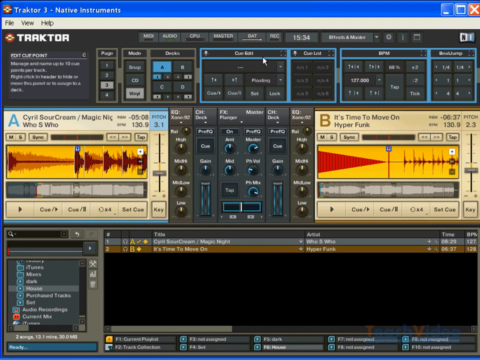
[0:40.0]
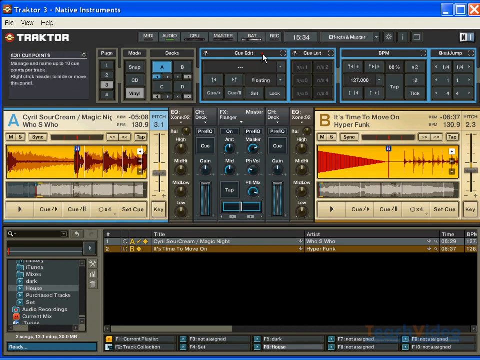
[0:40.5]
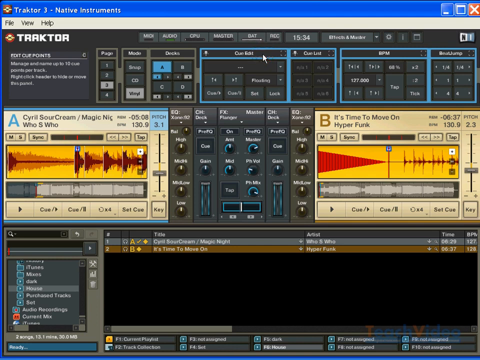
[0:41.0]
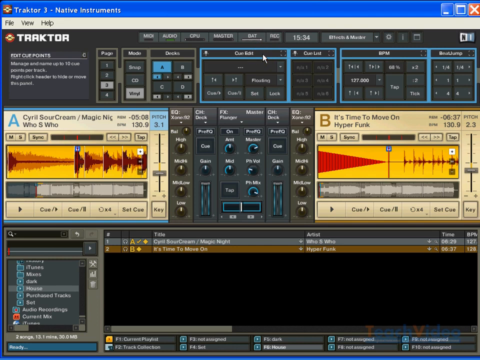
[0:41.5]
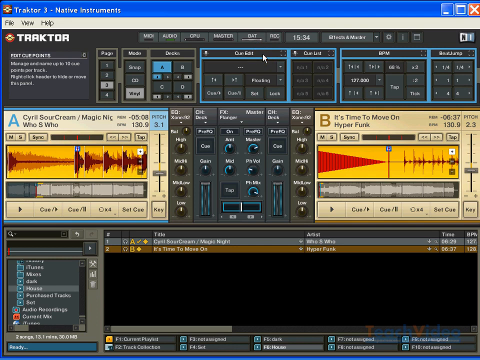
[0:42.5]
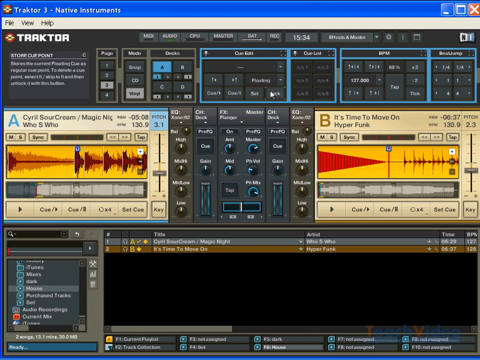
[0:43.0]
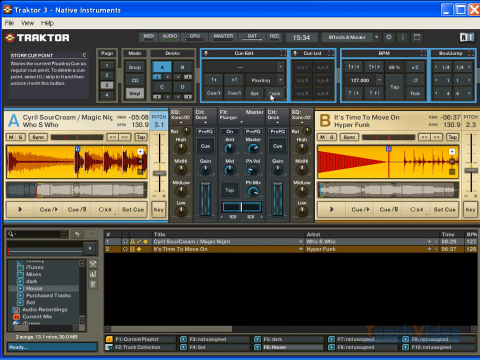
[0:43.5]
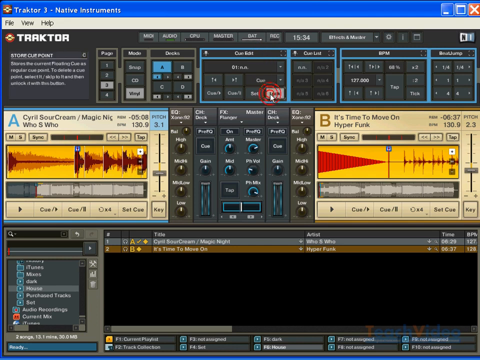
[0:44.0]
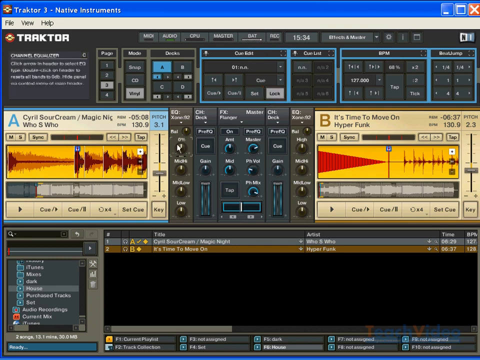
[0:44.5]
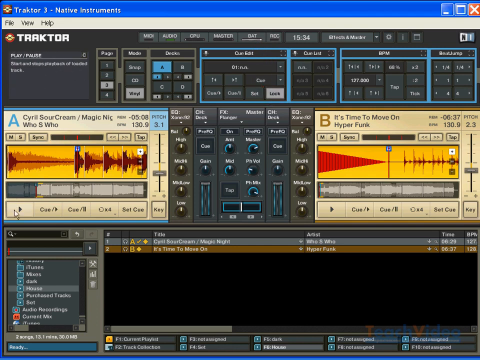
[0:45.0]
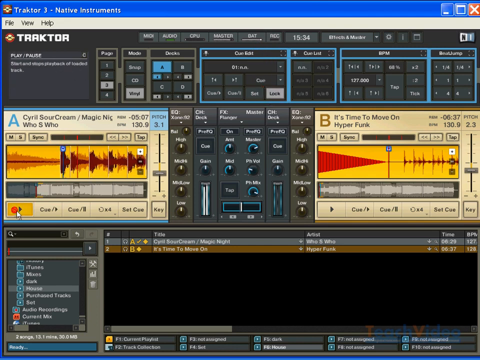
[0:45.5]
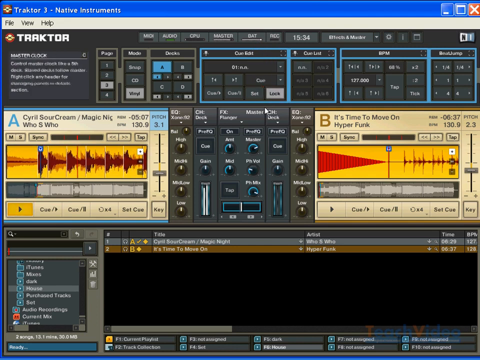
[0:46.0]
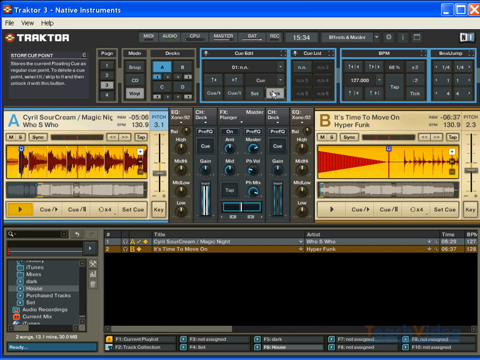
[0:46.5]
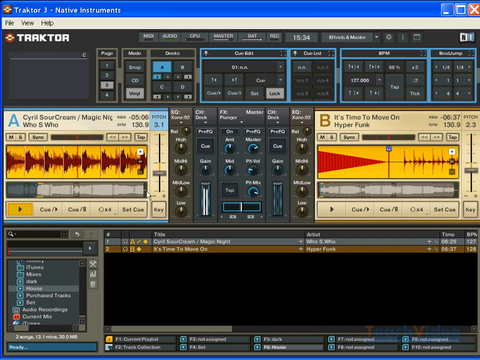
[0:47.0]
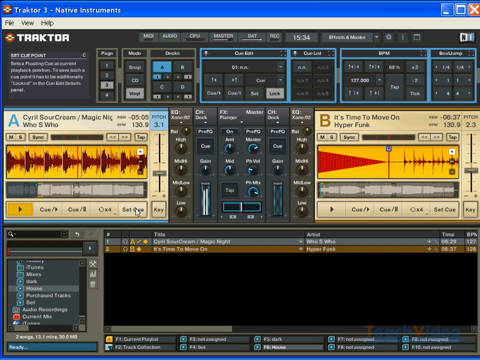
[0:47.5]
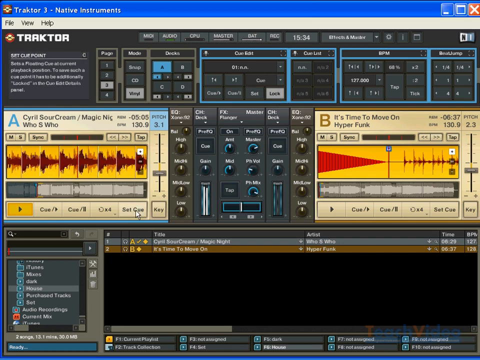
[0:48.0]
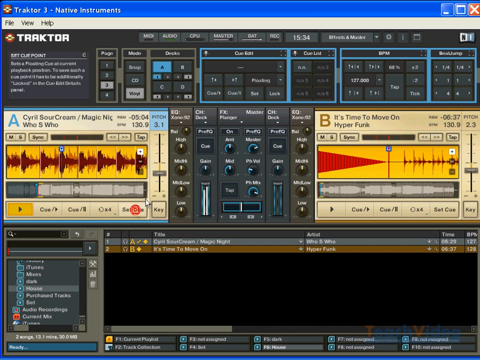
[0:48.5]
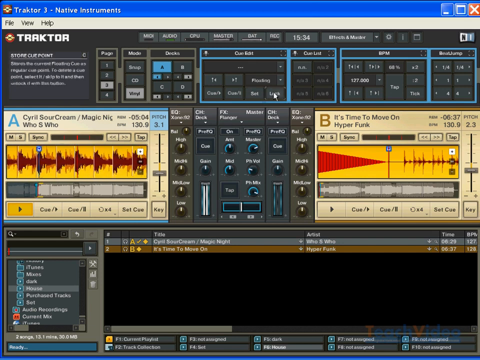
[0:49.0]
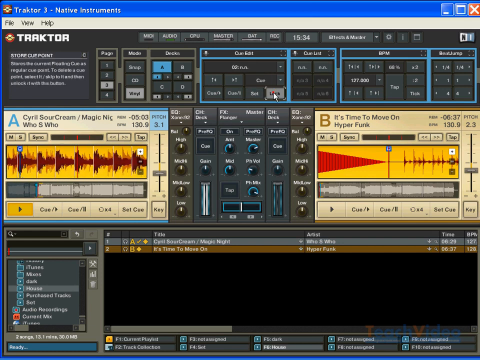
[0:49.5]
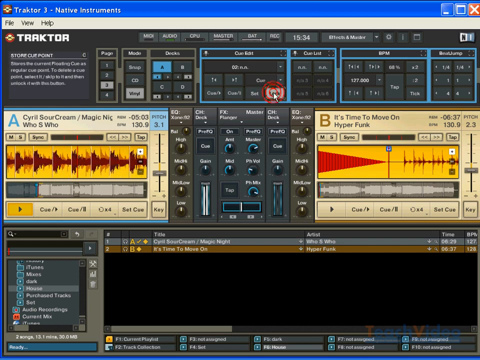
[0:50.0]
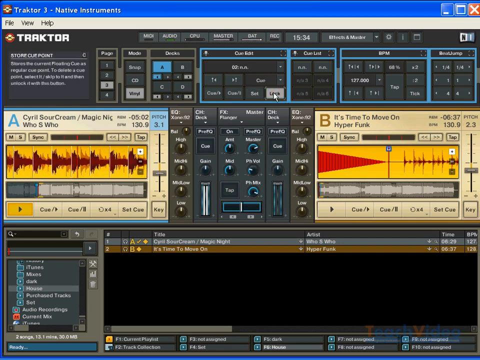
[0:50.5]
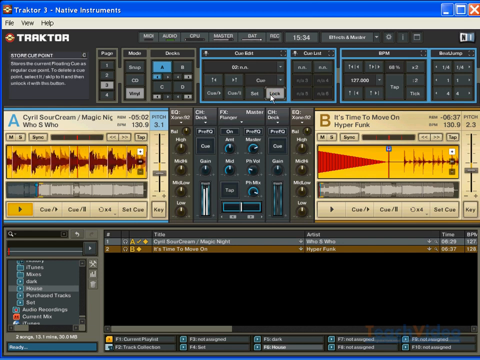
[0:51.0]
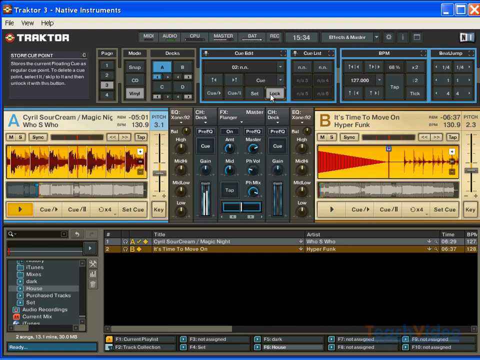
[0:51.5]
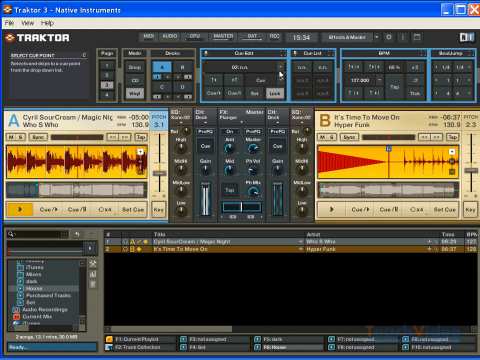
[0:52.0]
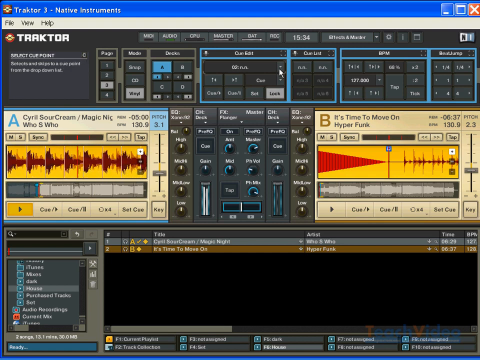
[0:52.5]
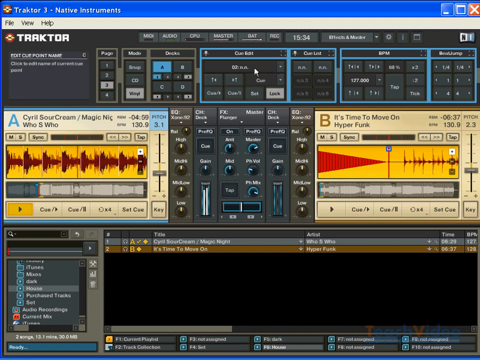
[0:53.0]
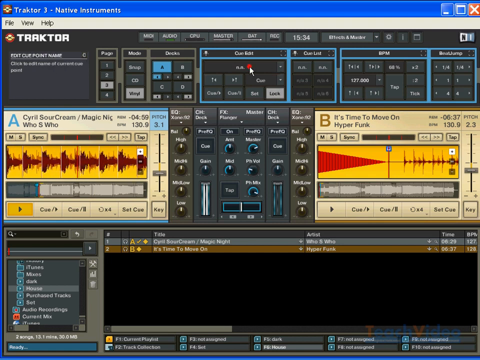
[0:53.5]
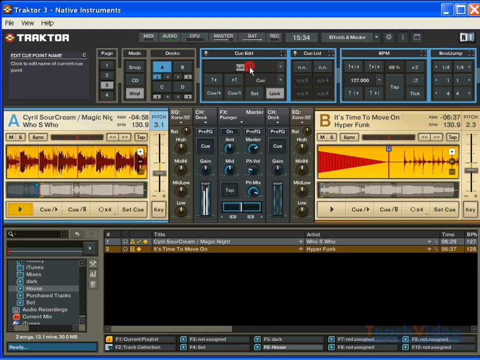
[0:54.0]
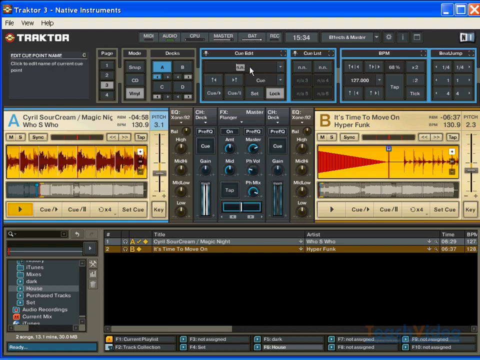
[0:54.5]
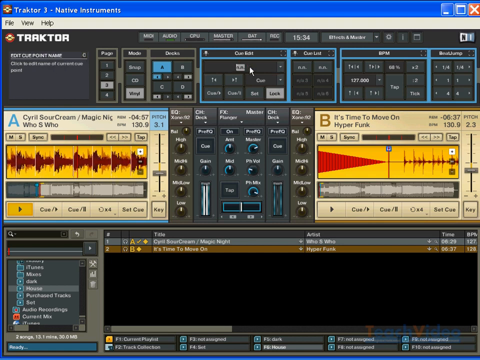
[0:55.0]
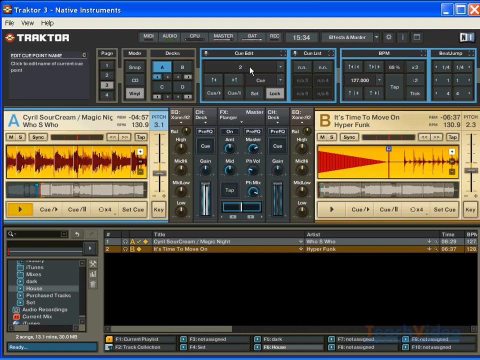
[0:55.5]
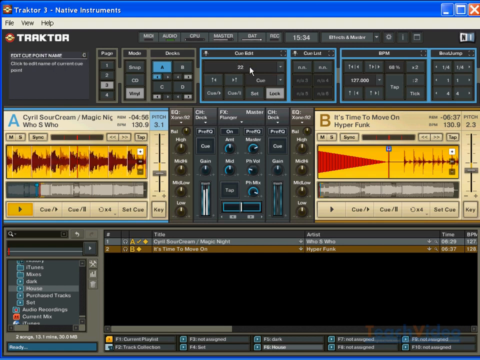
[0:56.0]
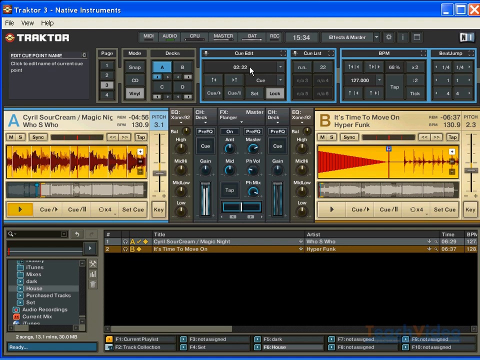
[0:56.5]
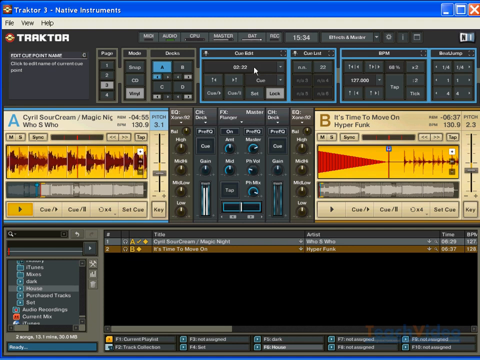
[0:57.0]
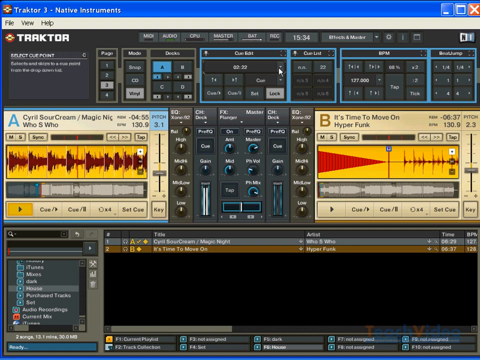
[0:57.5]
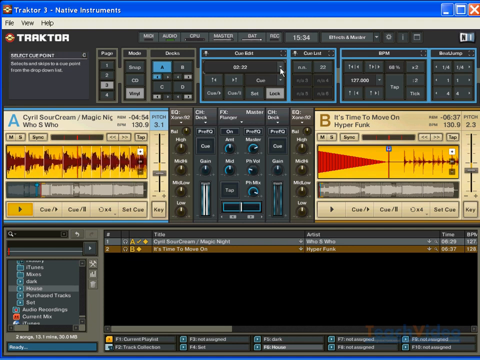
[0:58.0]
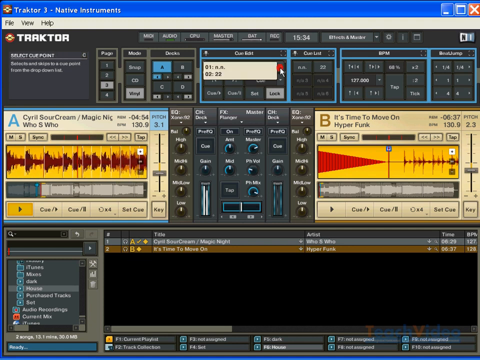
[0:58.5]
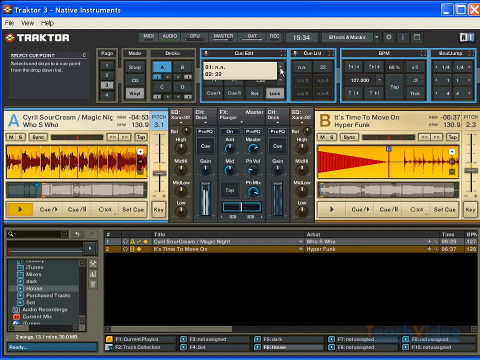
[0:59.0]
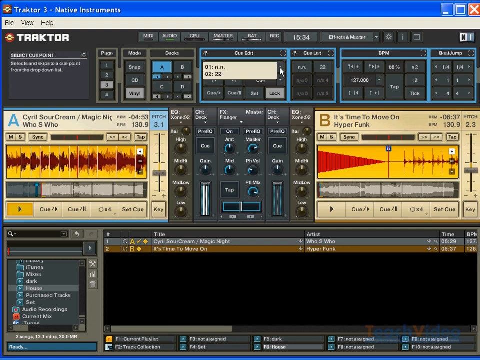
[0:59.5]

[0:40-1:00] The mouse reaches the top middle of the screen and clicks a box that says "Cue Edit". Beneath it is a whole bunch of boxes, and one in the bottom right says "Lock"; the mouse clicks it and that box, black before, becomes grayed out. The mouse goes back to the play button it used before and clicks it, then clicks Lock, then Set Cue, then Lock again. It then moves slightly above the Lock button to a dropdown right below "Cue Edit" and types "02: 22" into it. It clicks the little dropdown arrow, and a white selection box appears listing "01: n.n" and, below that, "02: 22".